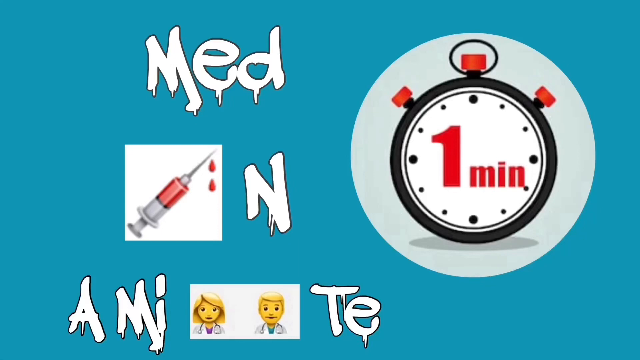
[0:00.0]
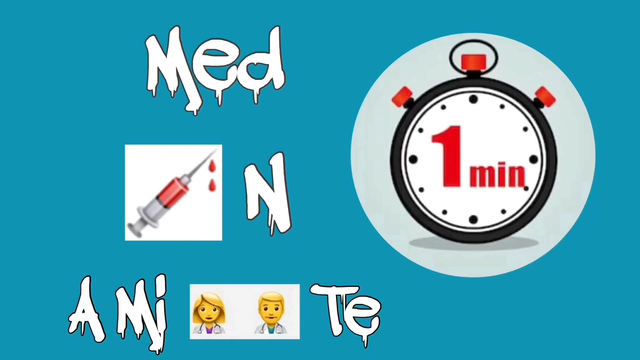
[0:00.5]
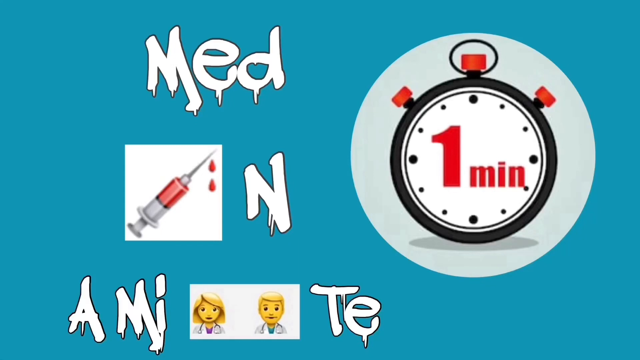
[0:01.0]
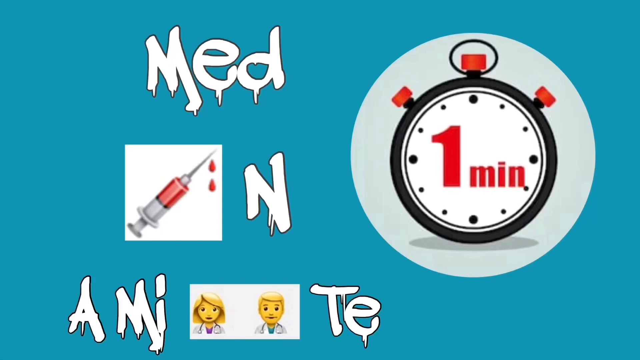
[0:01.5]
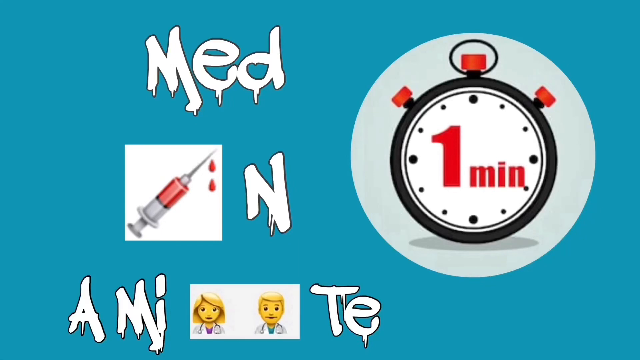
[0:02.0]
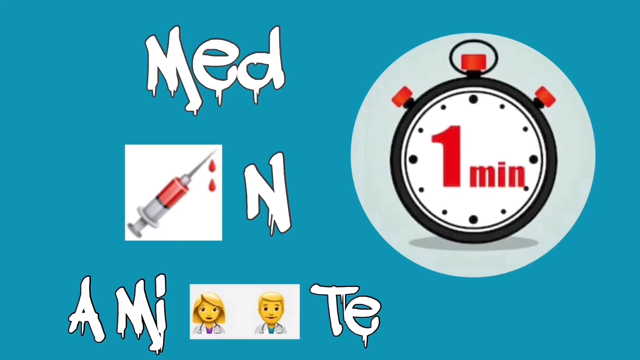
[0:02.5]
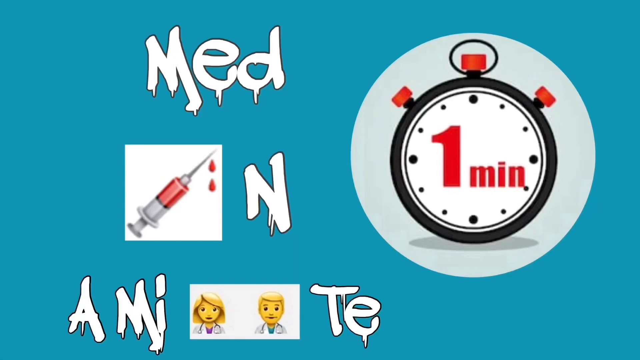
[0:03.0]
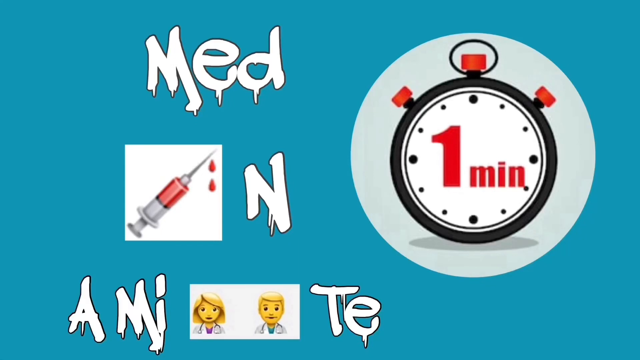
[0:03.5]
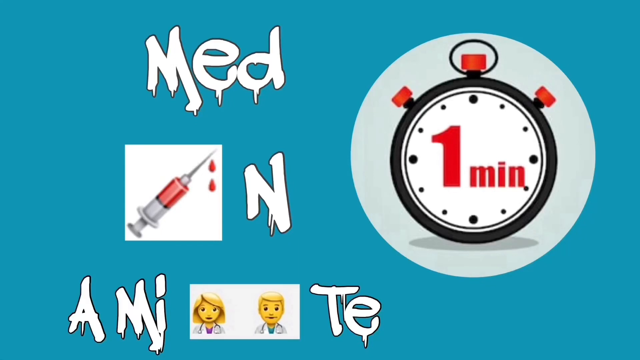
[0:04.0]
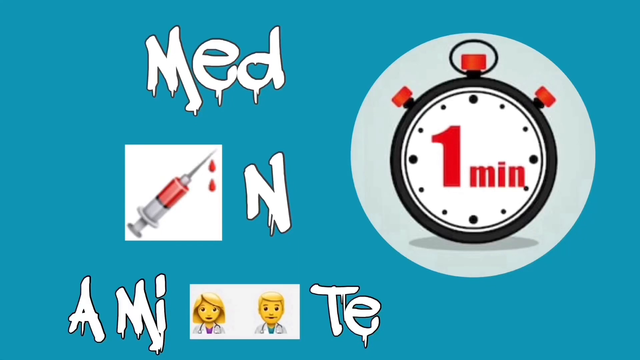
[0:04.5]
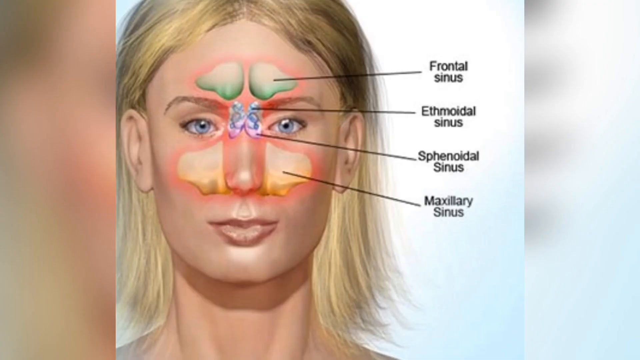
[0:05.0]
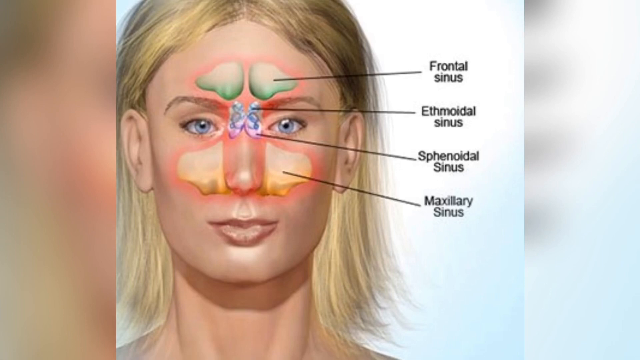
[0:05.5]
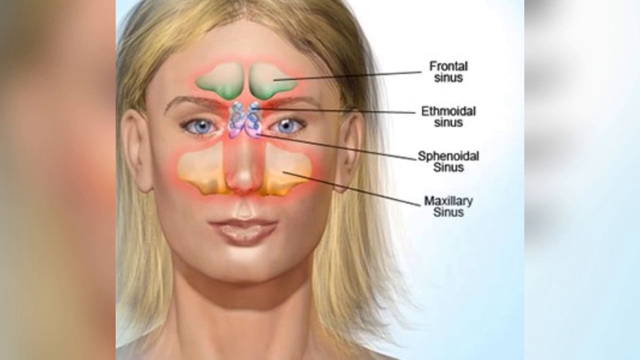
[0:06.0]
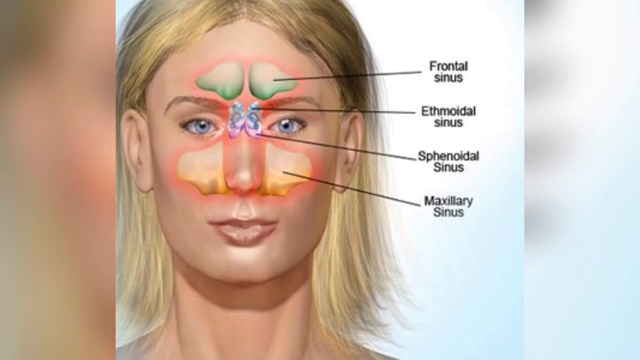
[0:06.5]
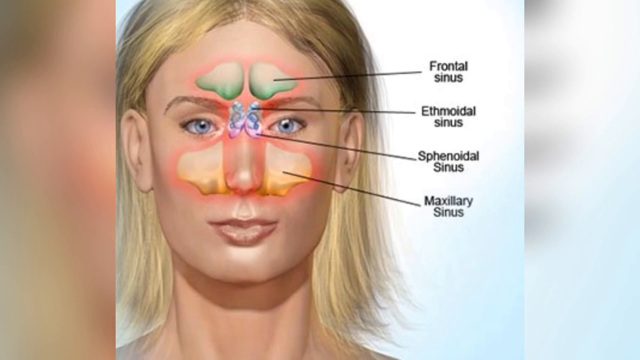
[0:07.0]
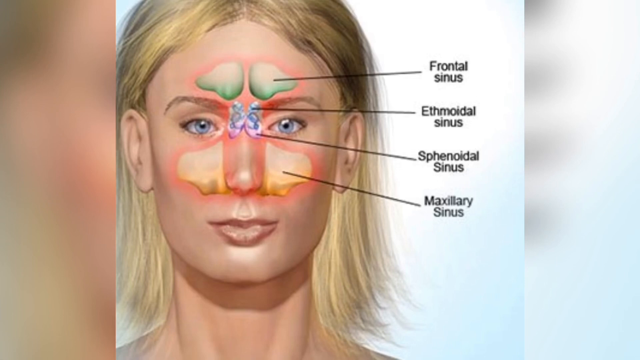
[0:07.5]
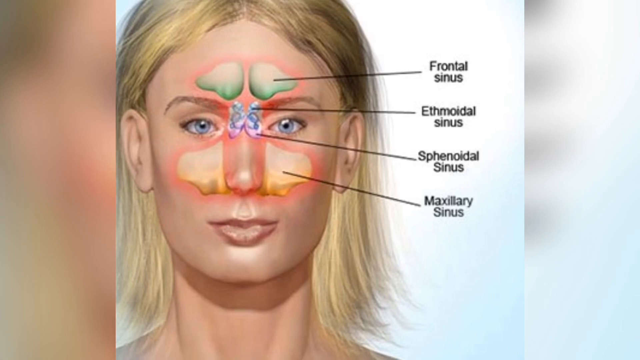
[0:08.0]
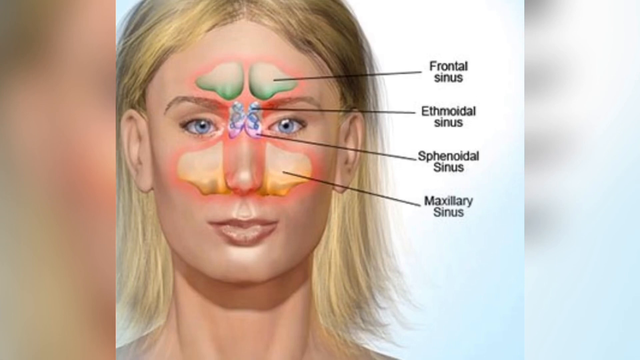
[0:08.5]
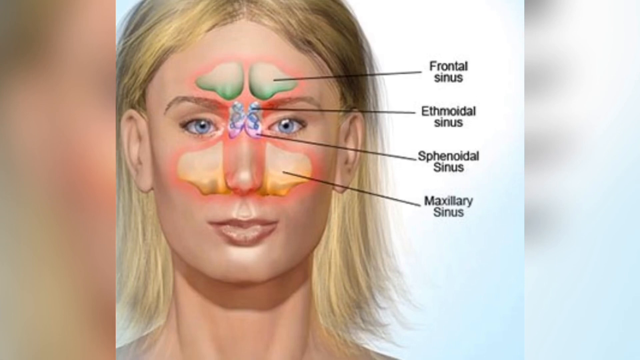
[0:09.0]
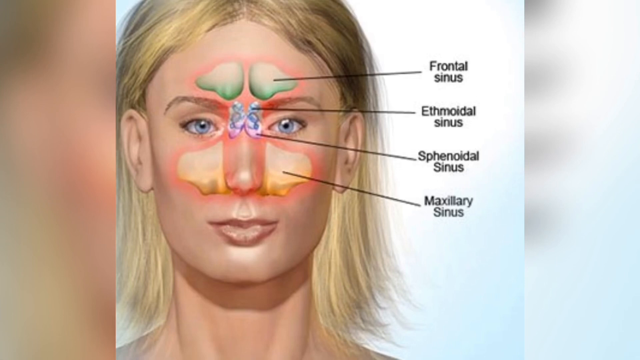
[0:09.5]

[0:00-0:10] The video opens with a picture of a black stopwatch on the right, inside a gray circle. The stopwatch has red handles on the top and on the two sides near the top, and inside it reads "1 MIN", meaning one minute. On the left are the words "med in a minute"; in place of the letter I there is a needle with blood dripping from it. Down below, the word "minute" shows only the letters "MI", then a picture of a female and a male, then the letters "TE". Next comes a drawing of a woman's face. She is Caucasian, with blue eyes and blonde hair down to her shoulders, and both of her full ears are visible. Four parts of her face are identified with long black lines: the frontal sinus in her forehead, the ethmoidal sinus between her eyes, the sphenoidal sinus also between her eyes but lower down on the bridge of her nose, and the maxillary sinus on the right and left sides of the nose.